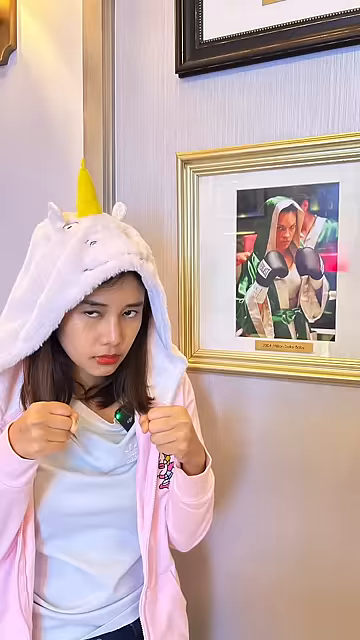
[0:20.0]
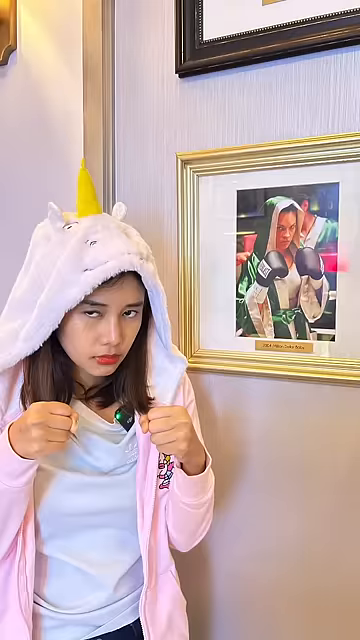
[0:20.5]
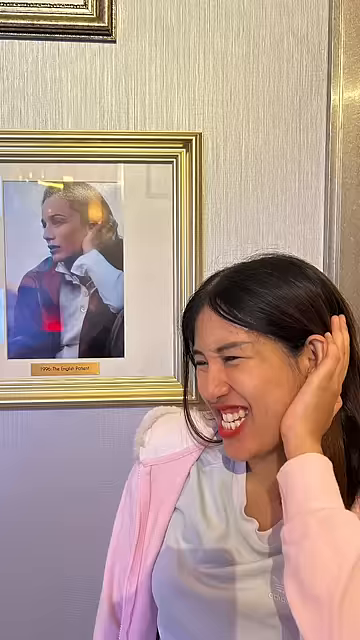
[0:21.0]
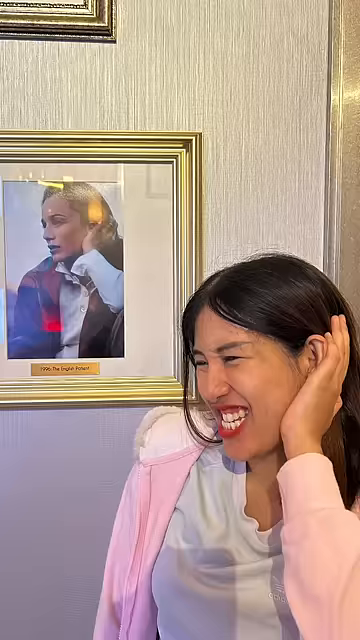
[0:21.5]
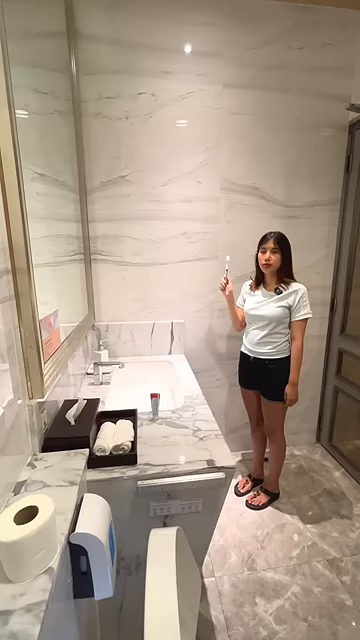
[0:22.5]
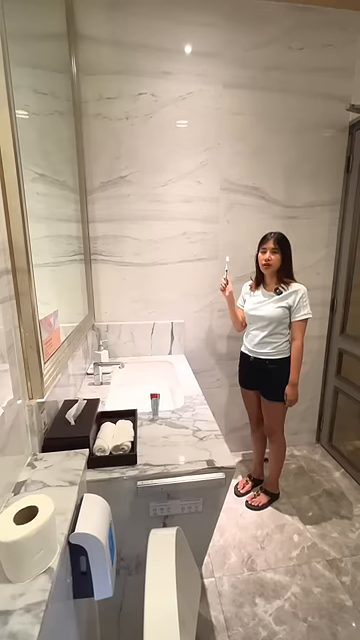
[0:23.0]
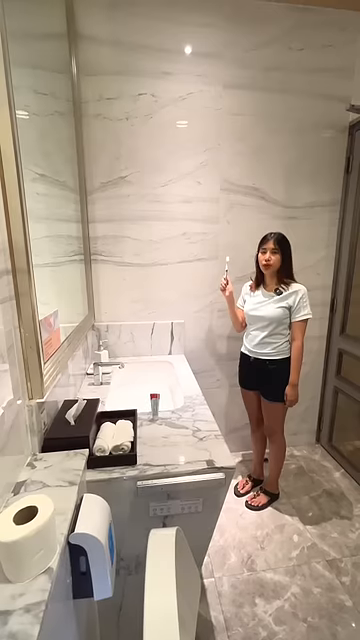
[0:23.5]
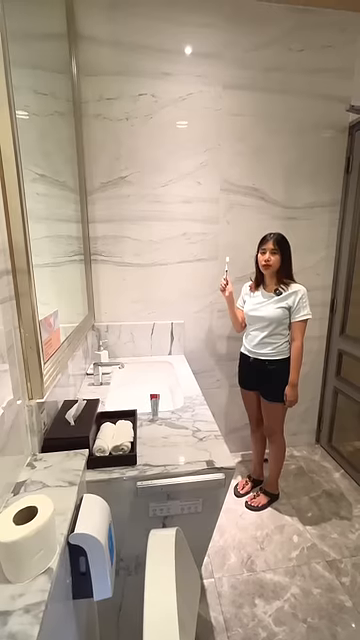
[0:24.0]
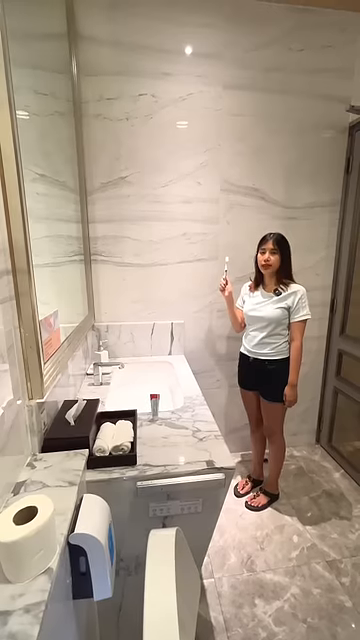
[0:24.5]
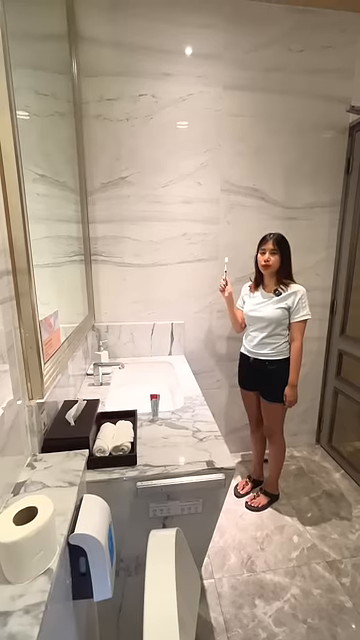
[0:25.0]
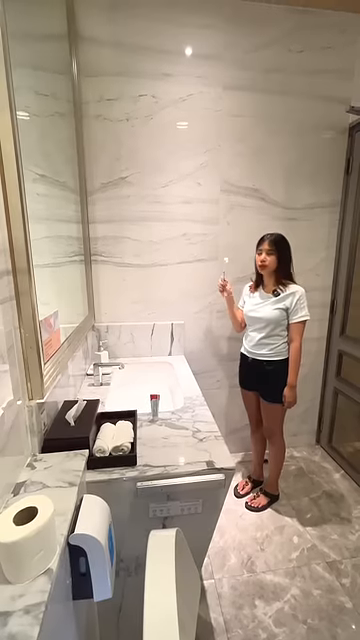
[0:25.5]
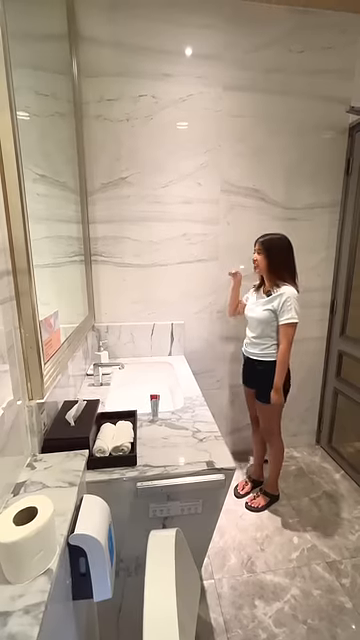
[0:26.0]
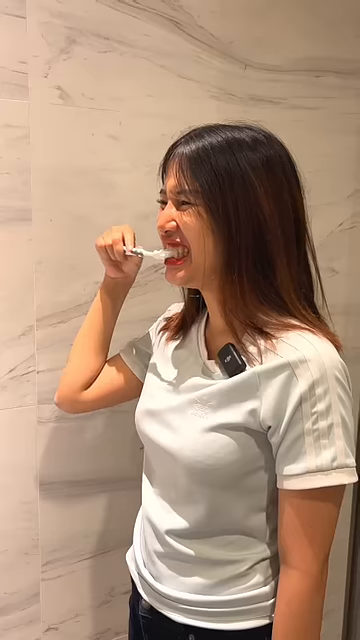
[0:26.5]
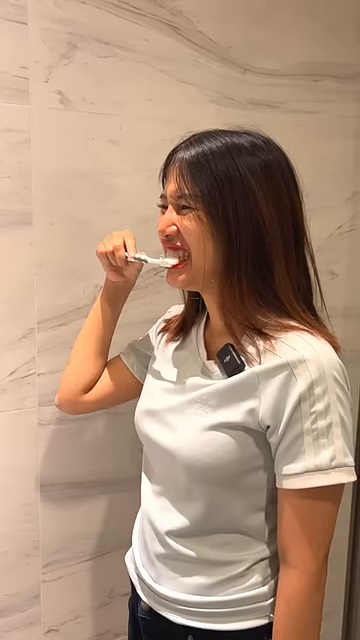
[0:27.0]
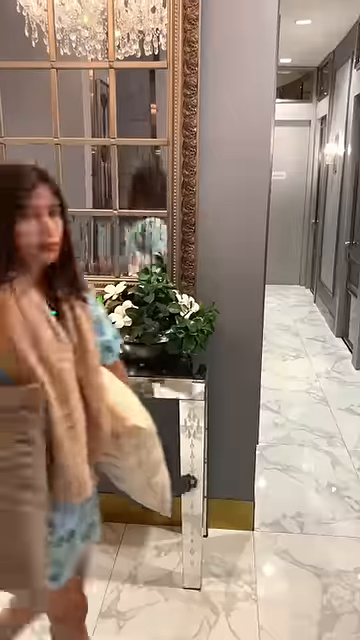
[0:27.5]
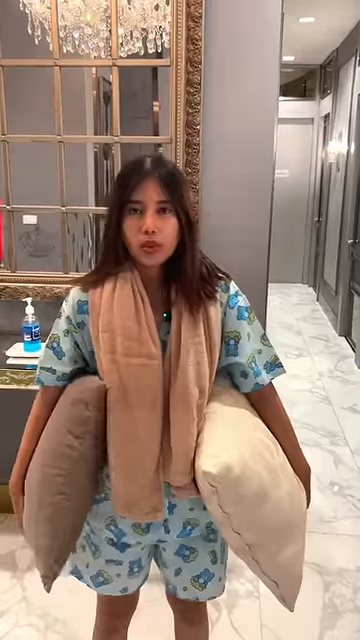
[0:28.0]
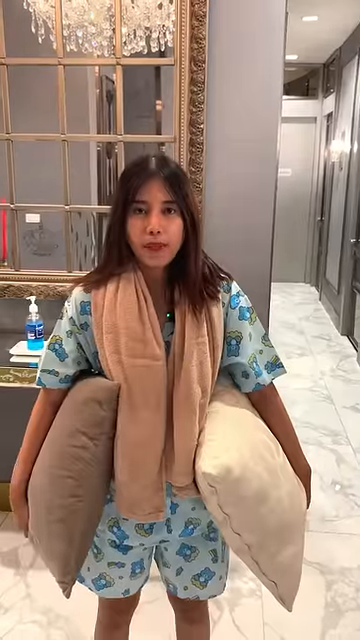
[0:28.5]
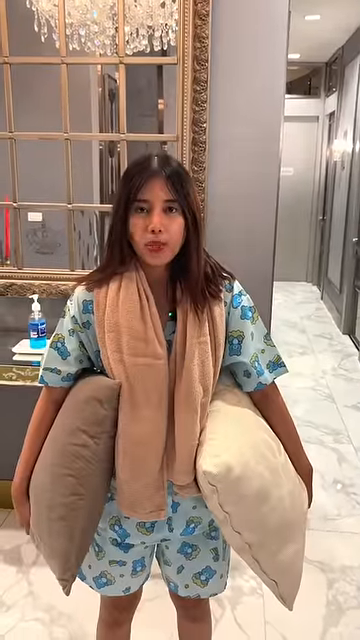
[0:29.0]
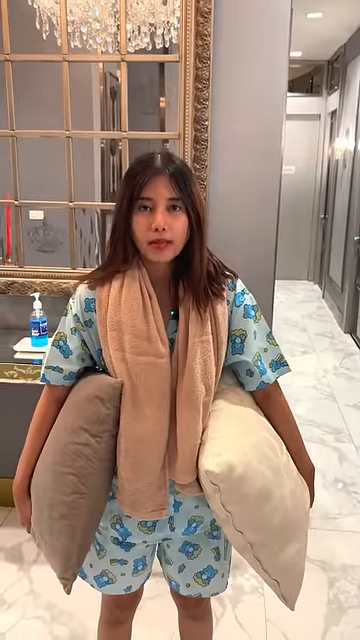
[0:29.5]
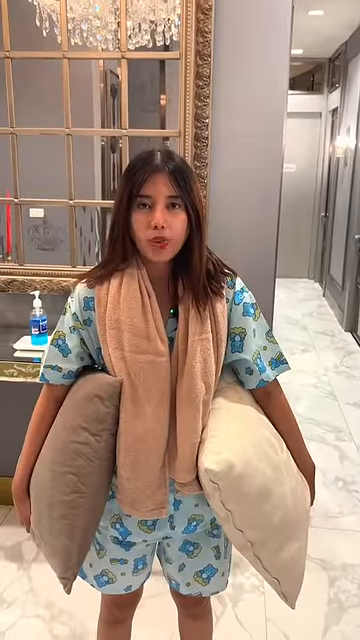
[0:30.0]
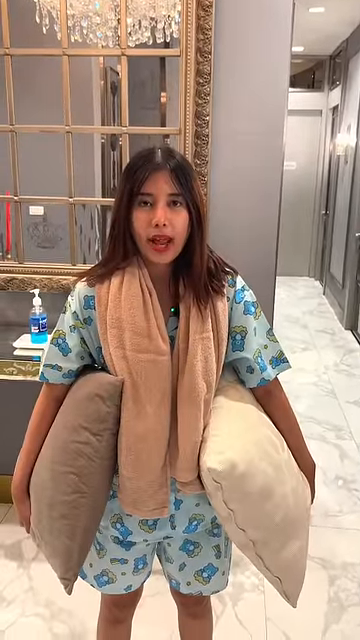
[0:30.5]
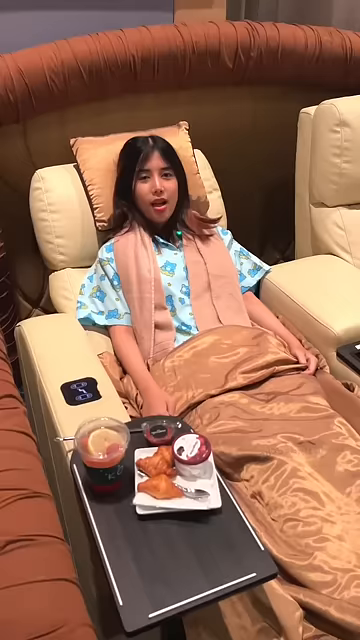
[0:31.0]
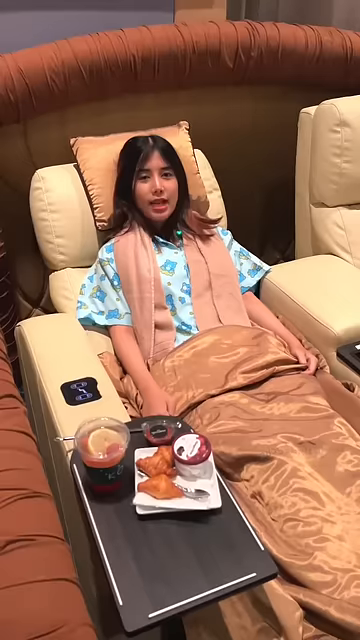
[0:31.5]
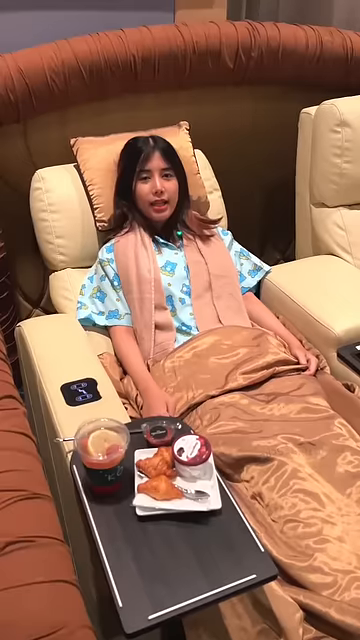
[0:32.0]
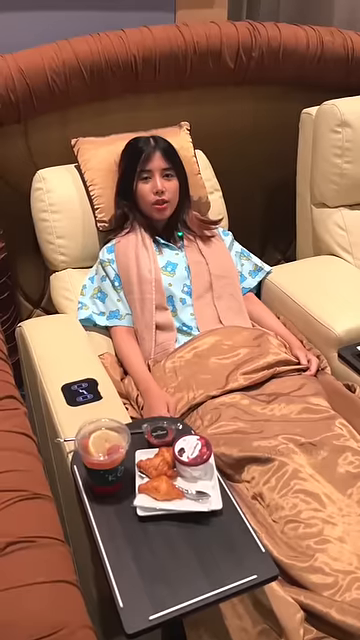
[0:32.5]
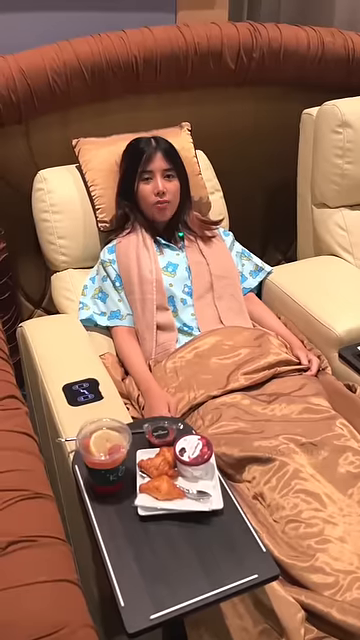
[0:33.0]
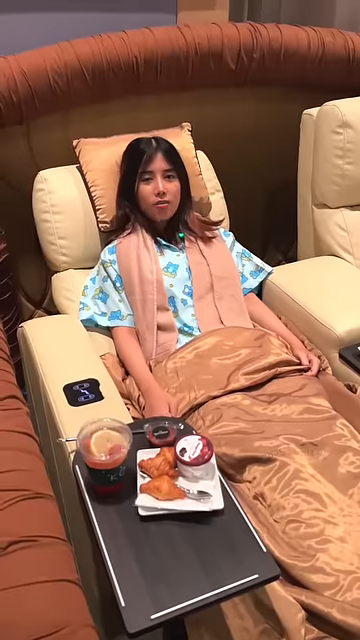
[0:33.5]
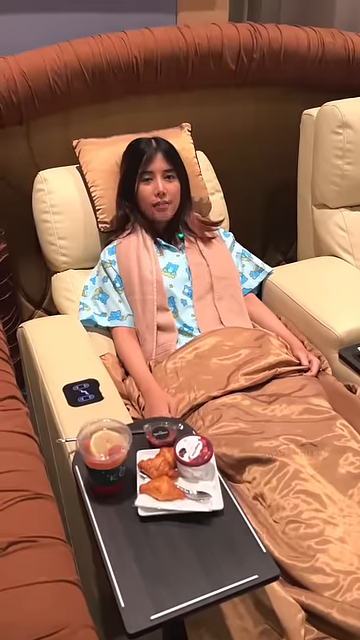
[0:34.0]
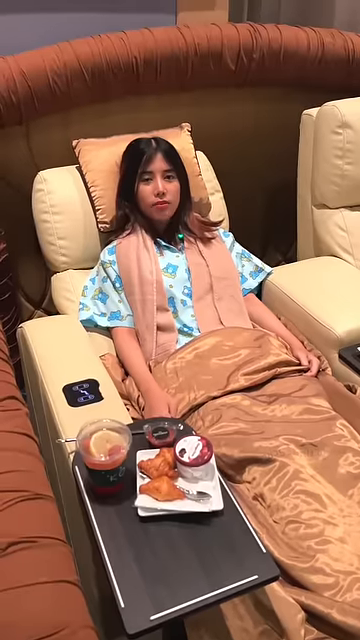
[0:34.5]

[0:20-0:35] The woman, wearing the unicorn hood, stands next to a piece of art. She takes the hood down and stands next to another piece of art. She is then in what looks like a bathroom with marble on the counter, the floor and the walls, where she brushes her teeth. Next she holds a towel and two pillows in her hands, and then she is in what looks like a theater chair, all comfied up and ready to watch the movie. She is now in pajamas, with a blanket covering her legs and a towel around her neck, in a reclining movie chair that looks comfortable enough to sleep in. There is food on the little table next to her as she gets ready.